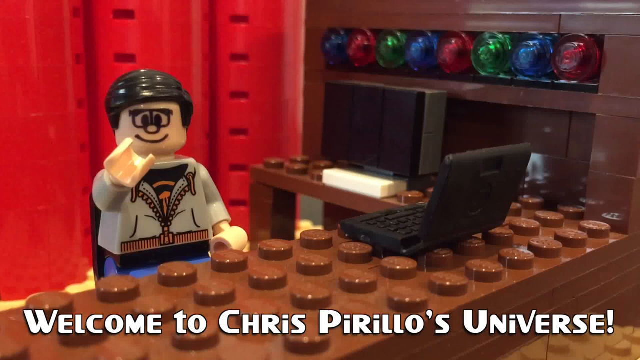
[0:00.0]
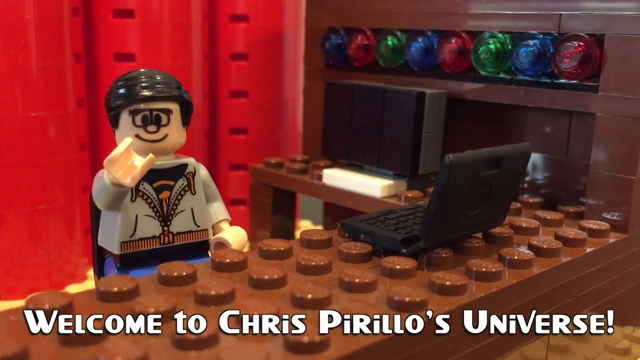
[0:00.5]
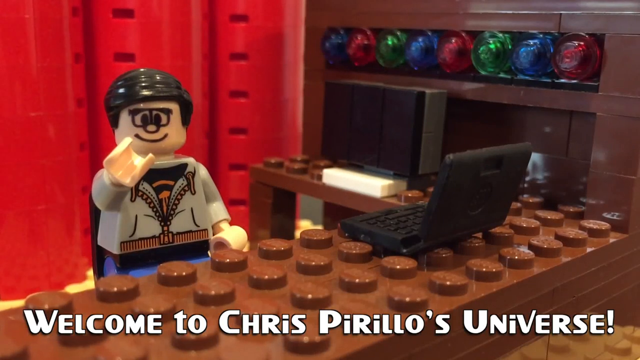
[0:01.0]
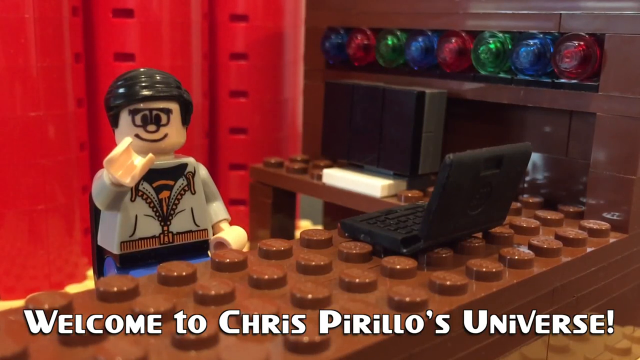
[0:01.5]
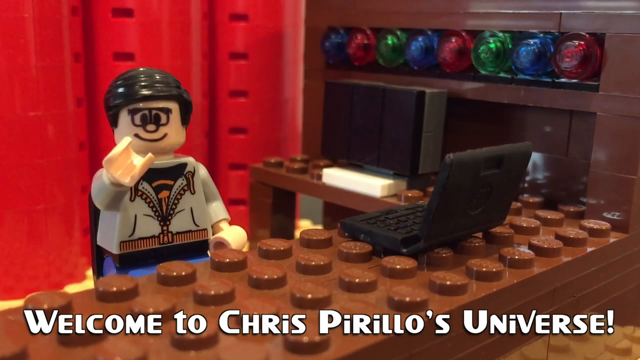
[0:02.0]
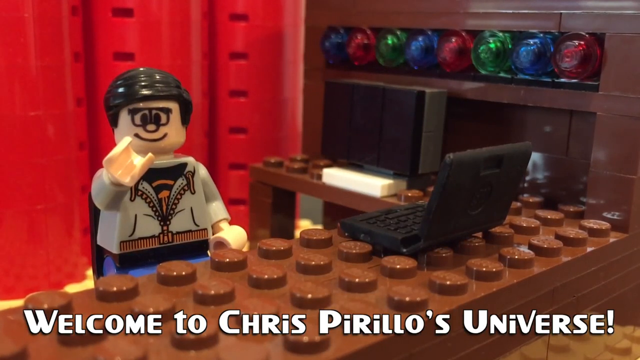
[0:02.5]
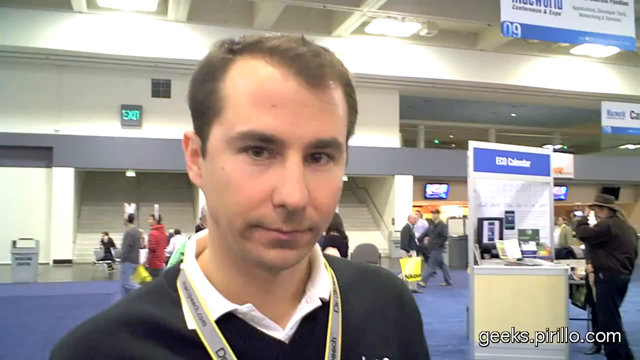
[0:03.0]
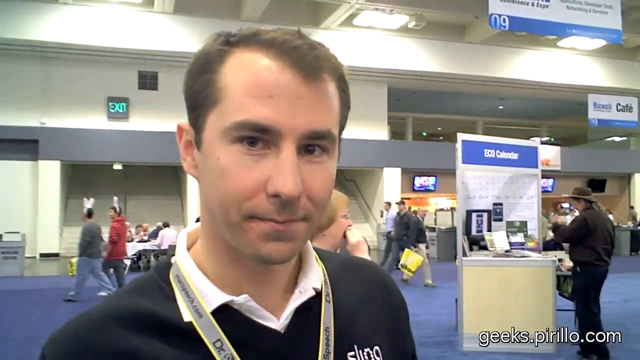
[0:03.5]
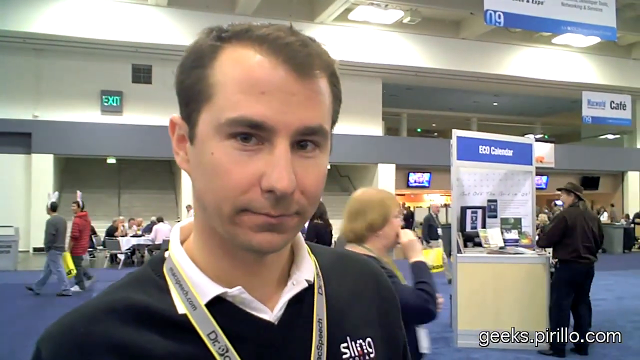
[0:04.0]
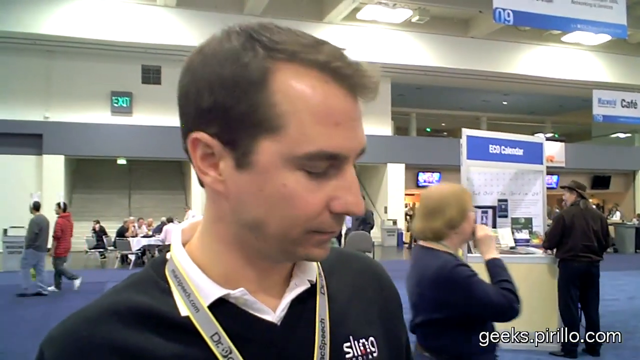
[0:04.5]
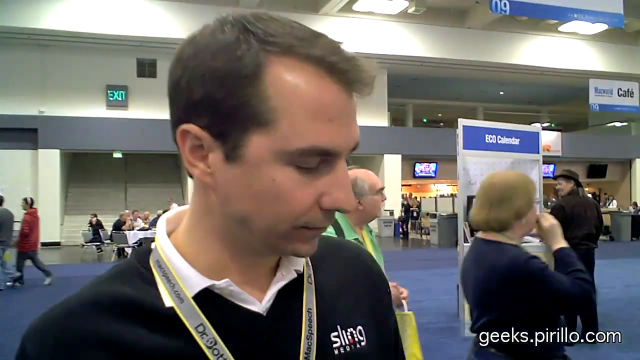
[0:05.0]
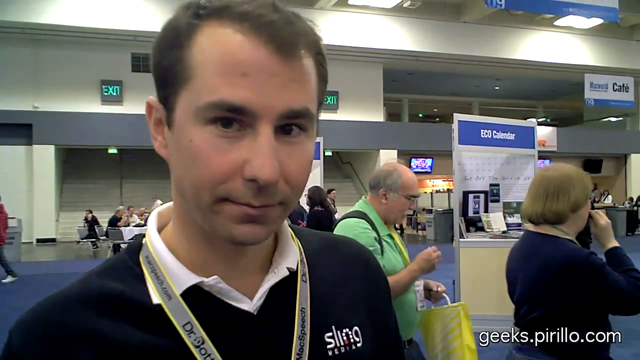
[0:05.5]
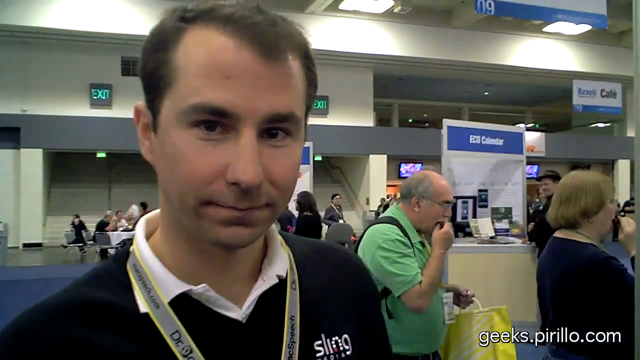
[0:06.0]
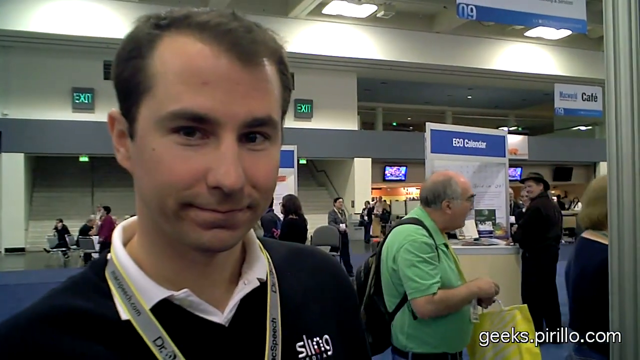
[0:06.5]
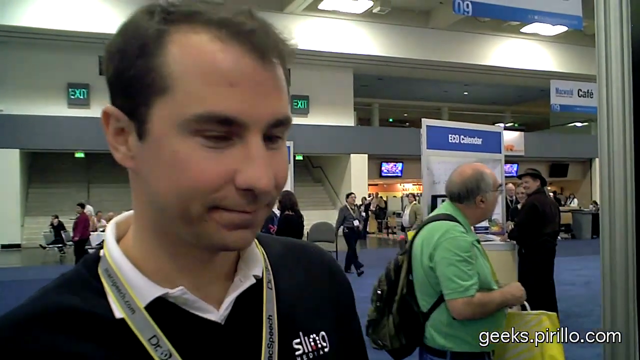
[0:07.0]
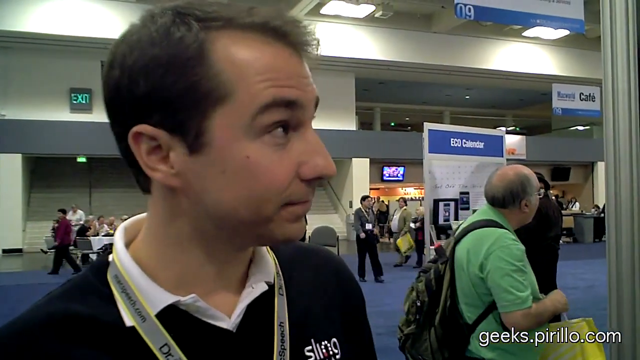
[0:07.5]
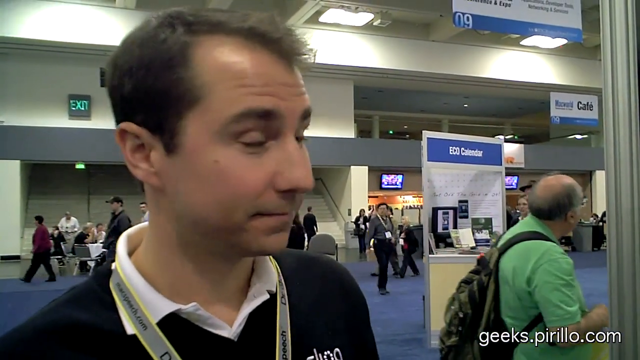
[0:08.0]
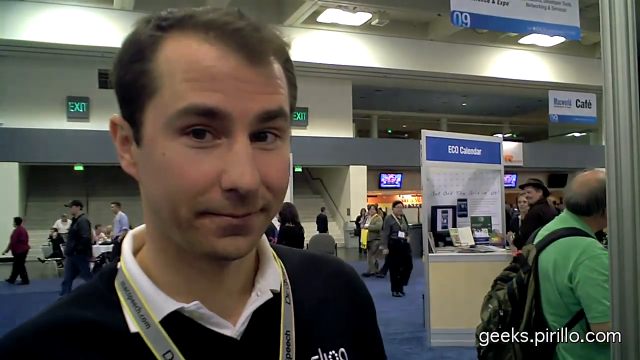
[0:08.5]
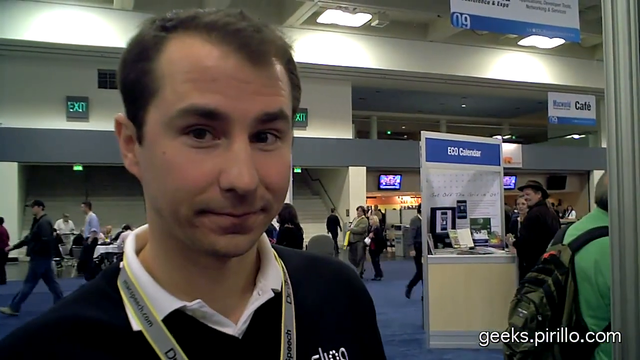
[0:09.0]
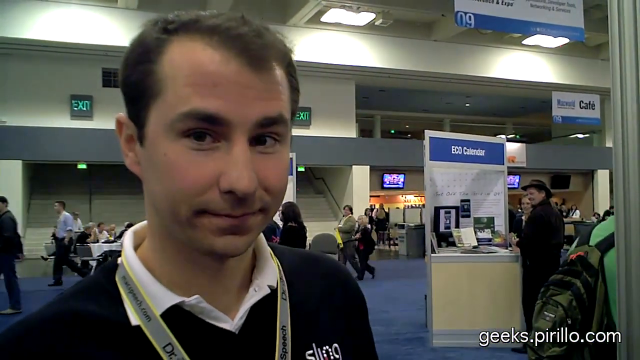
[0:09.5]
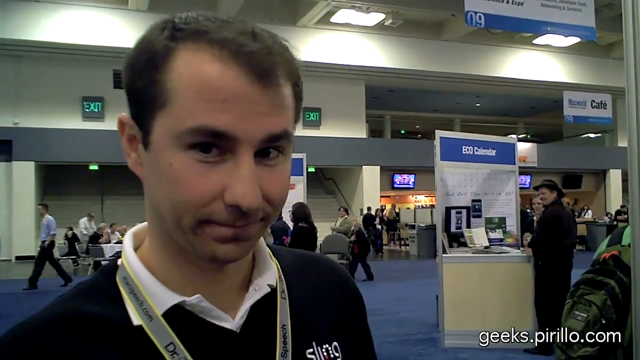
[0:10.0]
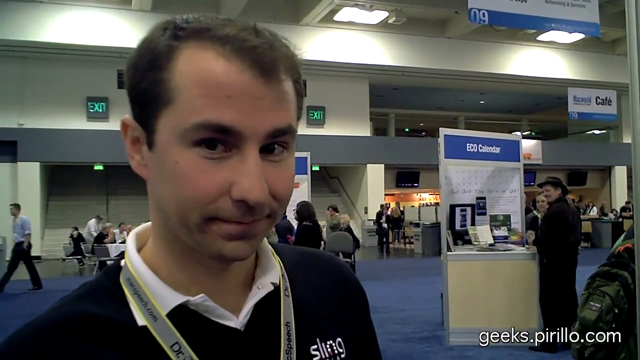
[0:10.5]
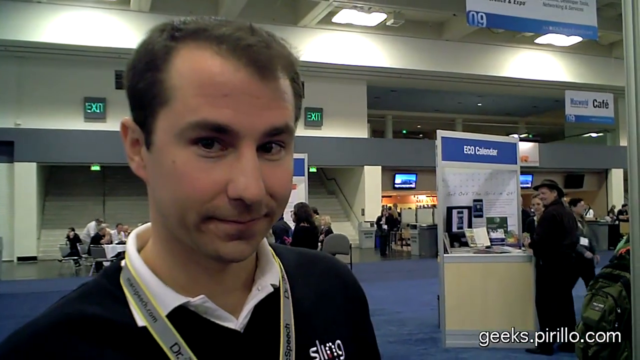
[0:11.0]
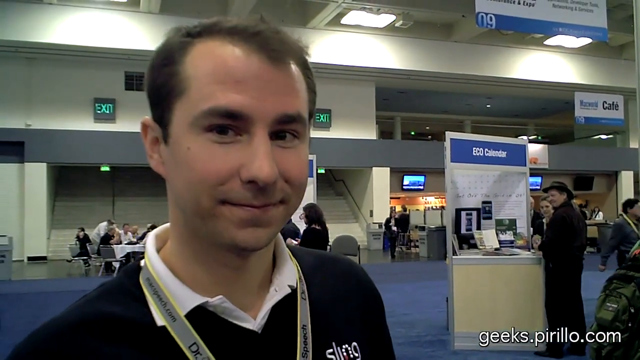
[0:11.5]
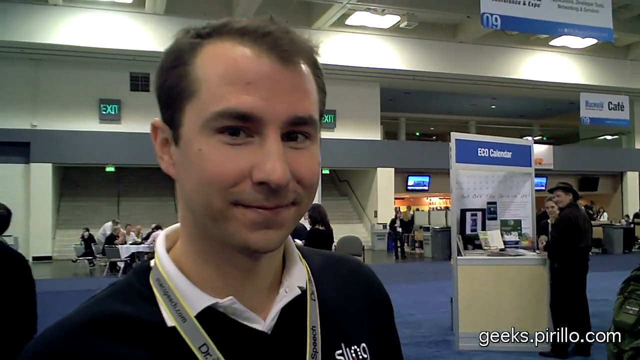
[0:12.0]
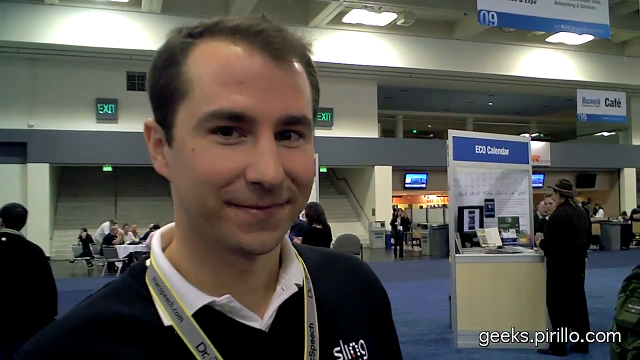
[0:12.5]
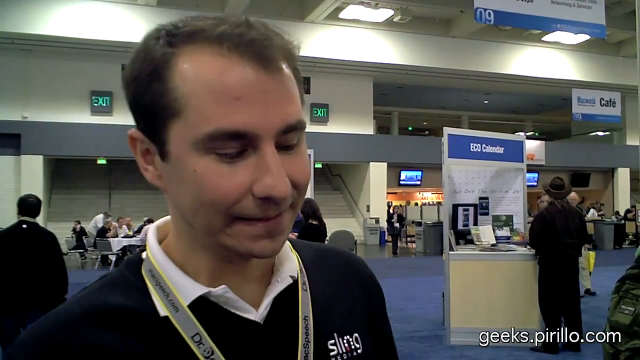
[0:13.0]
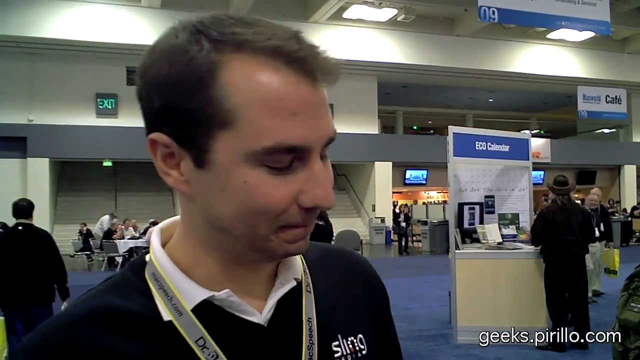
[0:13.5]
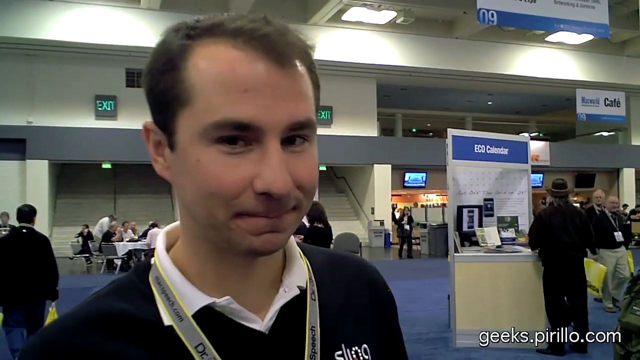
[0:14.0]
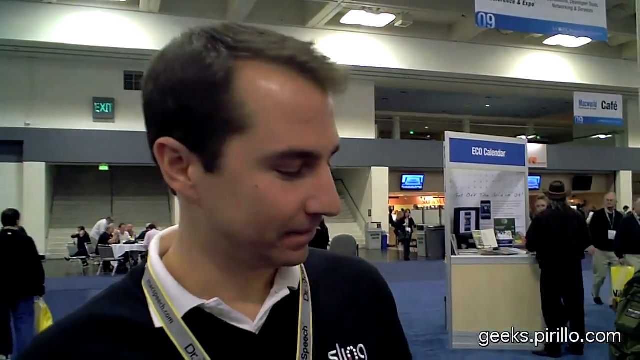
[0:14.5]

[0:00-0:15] The video is titled "How to Watch Live TV on your iPhone Slingbox." It shows a room decorated with Lego pieces against a red background. There appear to be two desks, colorful Lego pieces at the top that are supposed to represent lights, and what looks like three Lego computers or monitors. A Lego man with dark hair and glasses, wearing a gray jacket that is partially unzipped, is sitting behind a desk and waving at the viewer, and text reads "Welcome to Chris Pirillo's Universe." The title card then transitions to what looks like a convention, where a man wears a blue sweater with "Sling" in white letters over a white polo, along with some kind of lanyard. He is looking around and smirking.